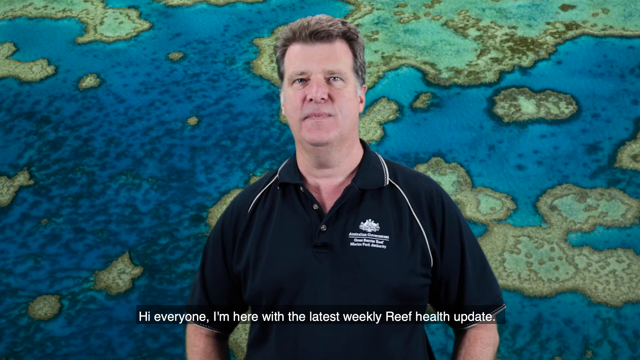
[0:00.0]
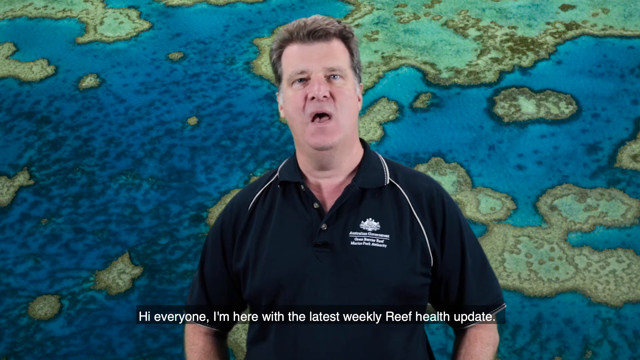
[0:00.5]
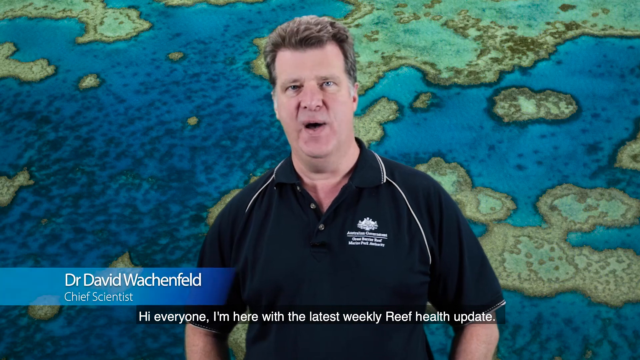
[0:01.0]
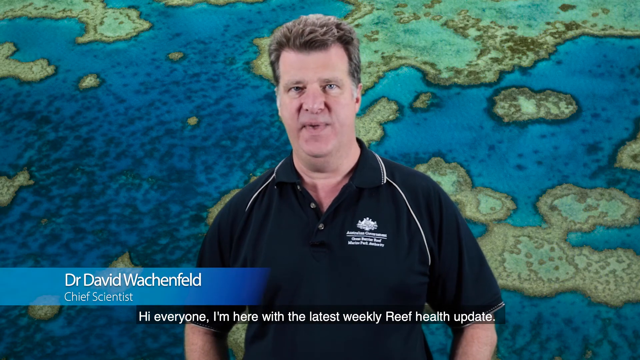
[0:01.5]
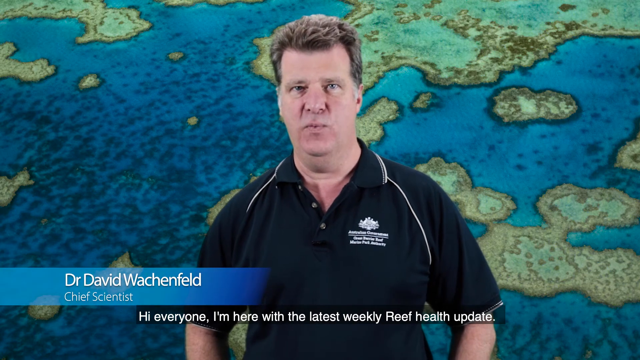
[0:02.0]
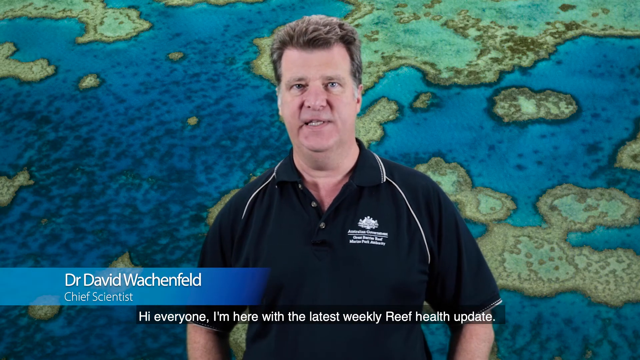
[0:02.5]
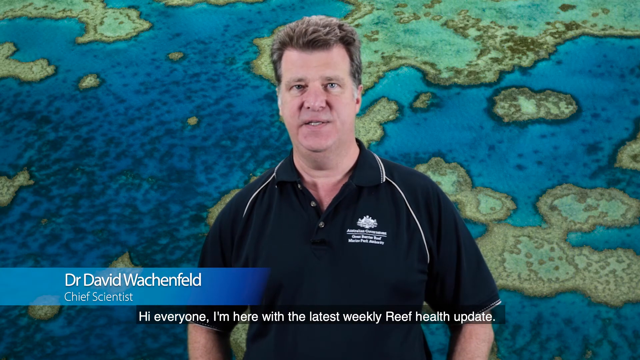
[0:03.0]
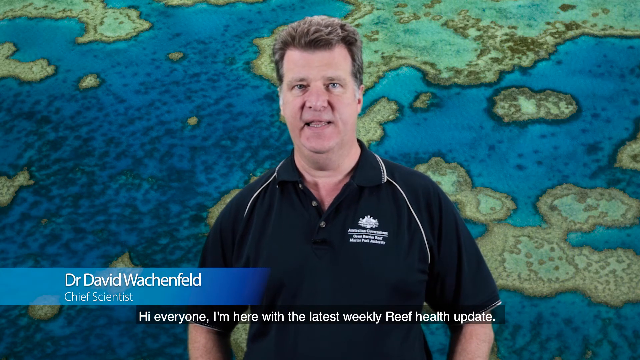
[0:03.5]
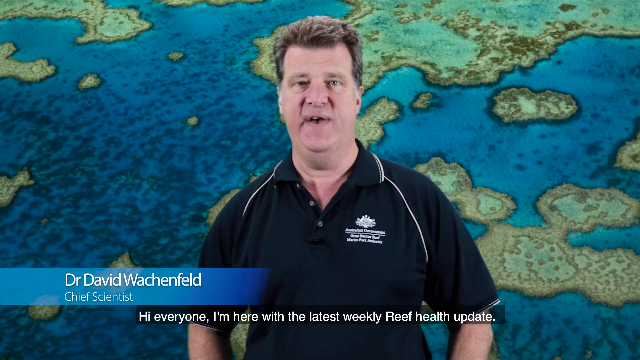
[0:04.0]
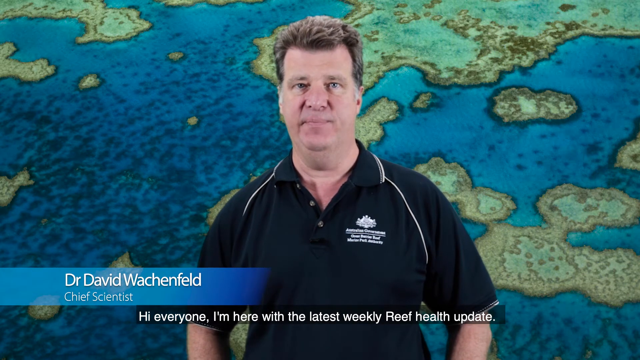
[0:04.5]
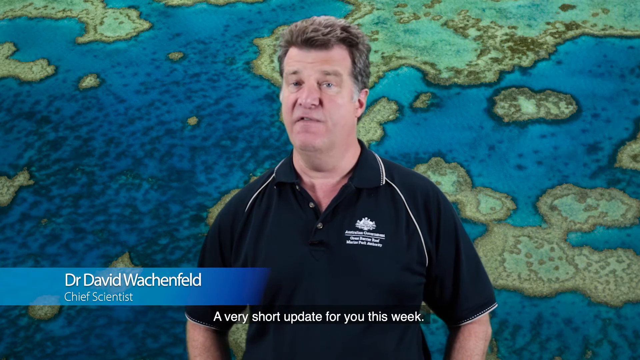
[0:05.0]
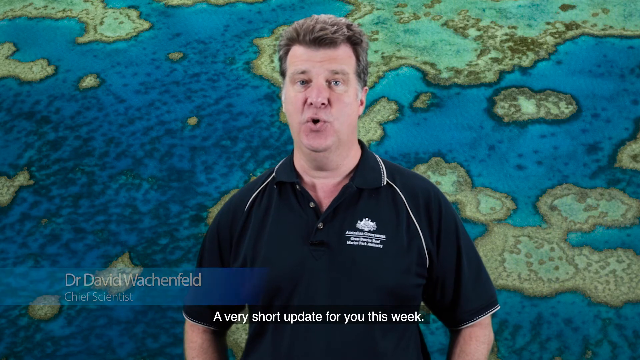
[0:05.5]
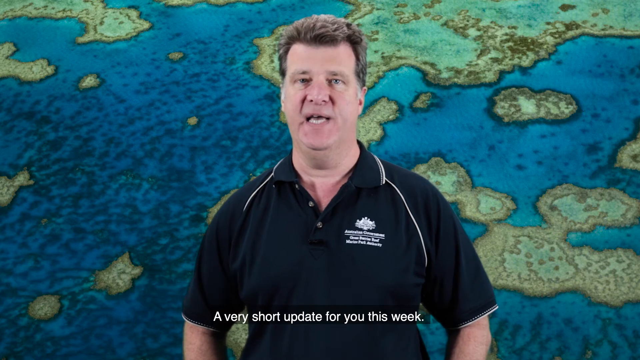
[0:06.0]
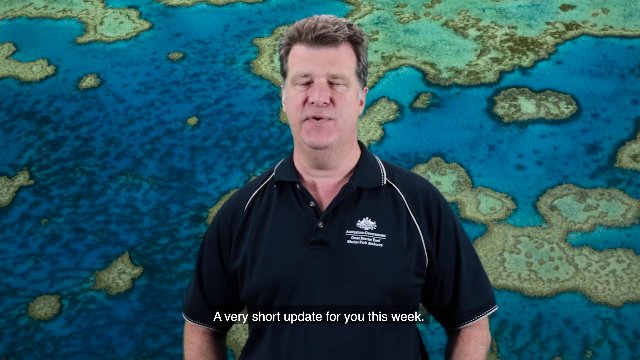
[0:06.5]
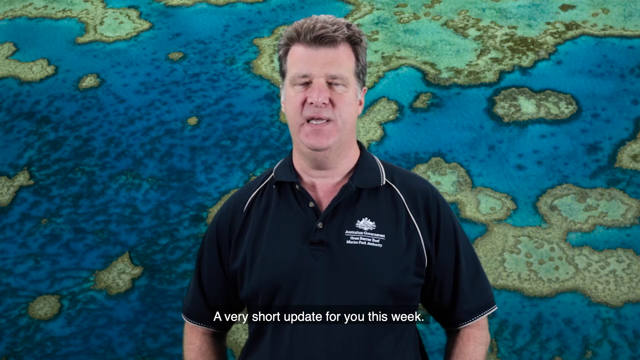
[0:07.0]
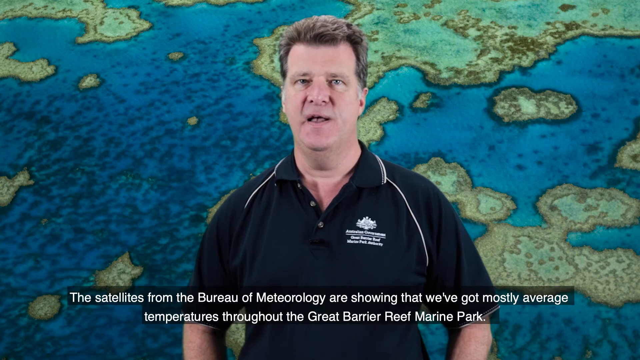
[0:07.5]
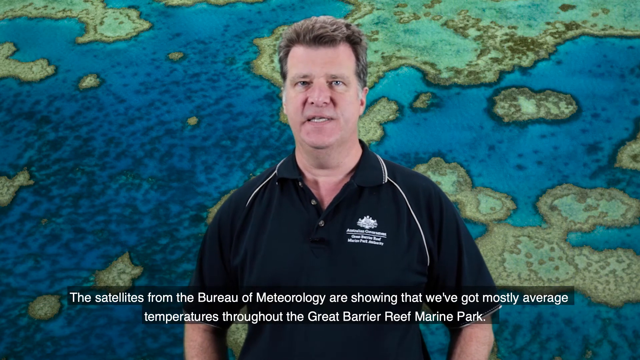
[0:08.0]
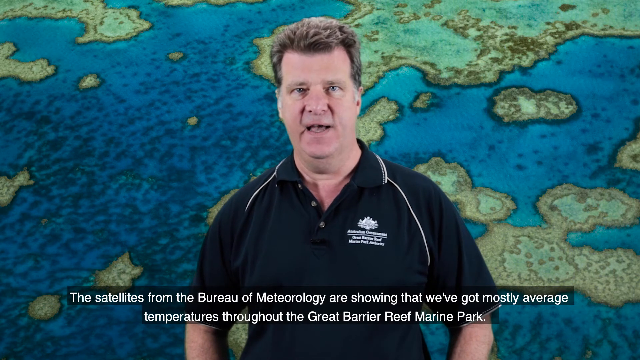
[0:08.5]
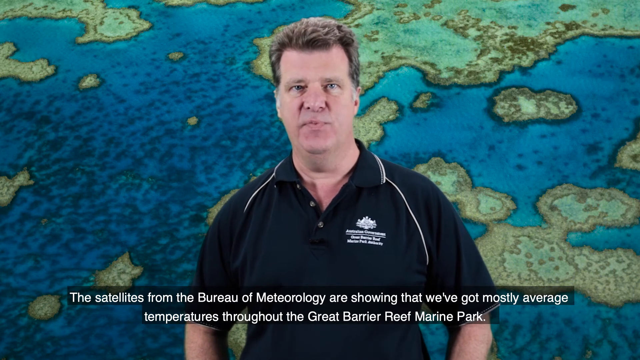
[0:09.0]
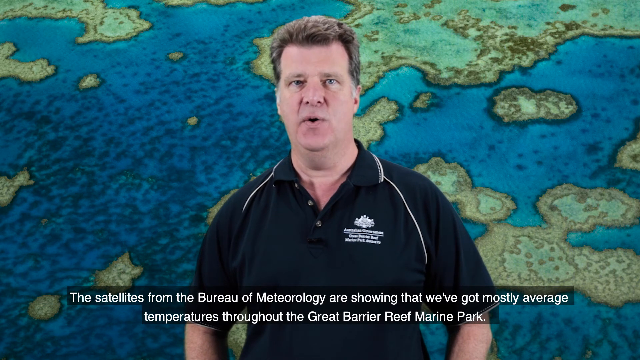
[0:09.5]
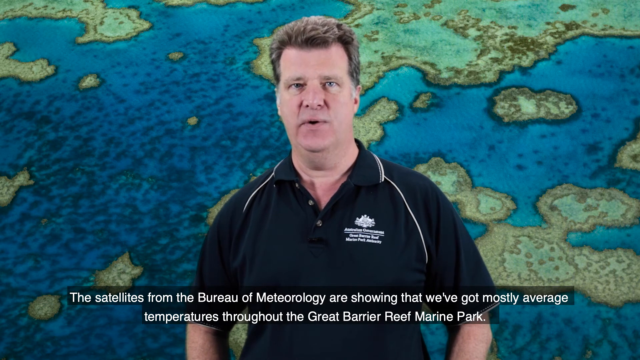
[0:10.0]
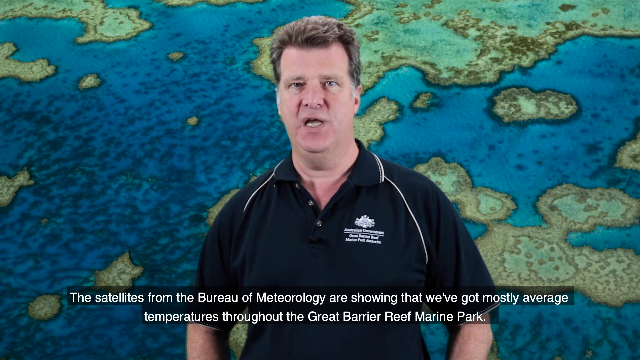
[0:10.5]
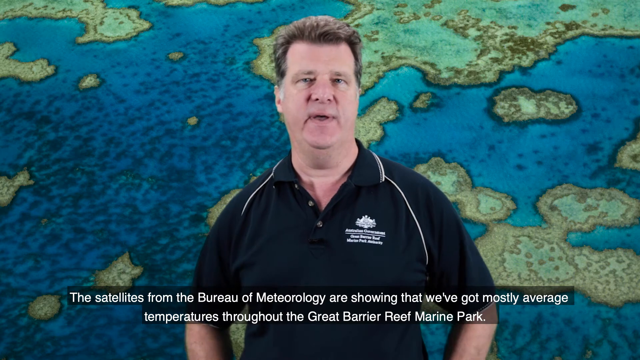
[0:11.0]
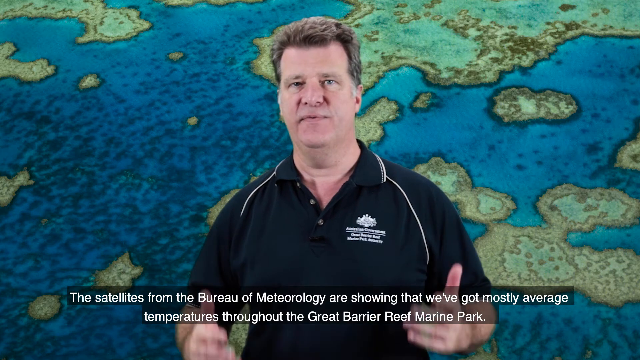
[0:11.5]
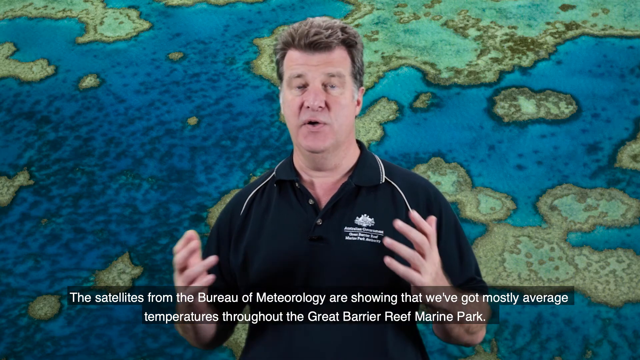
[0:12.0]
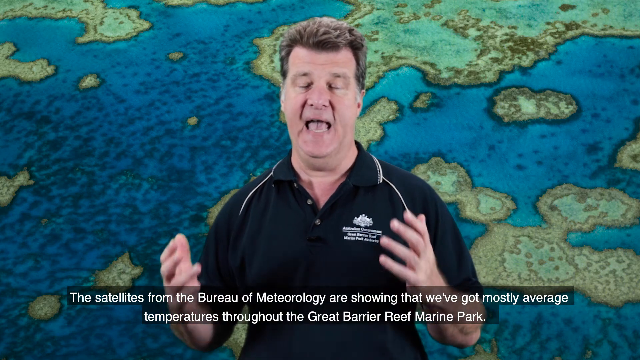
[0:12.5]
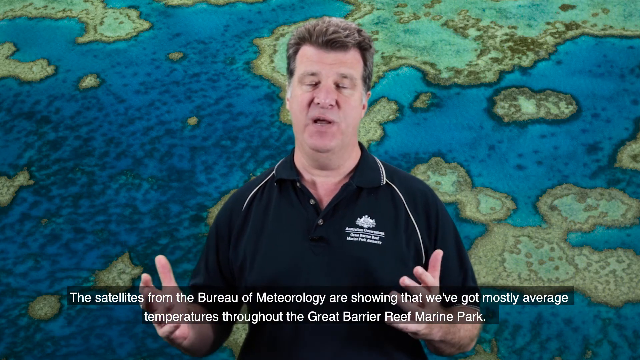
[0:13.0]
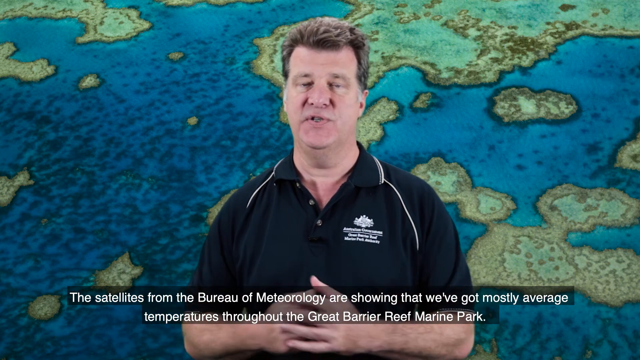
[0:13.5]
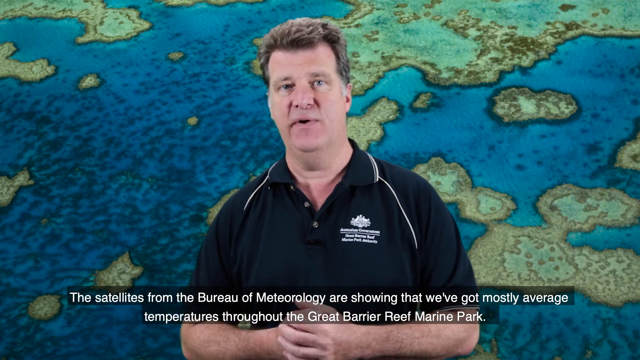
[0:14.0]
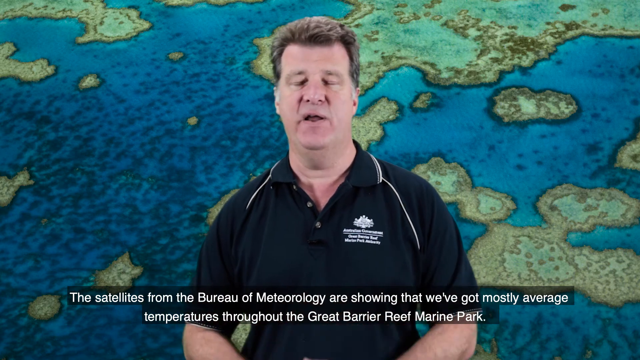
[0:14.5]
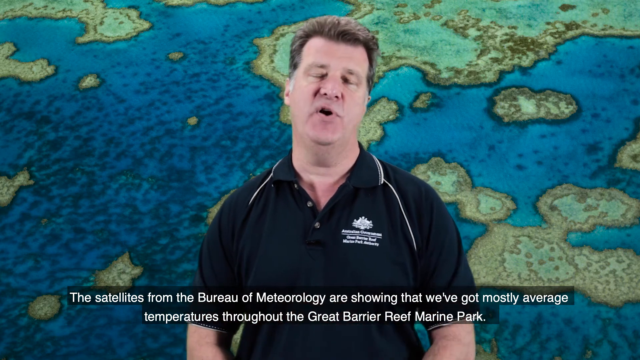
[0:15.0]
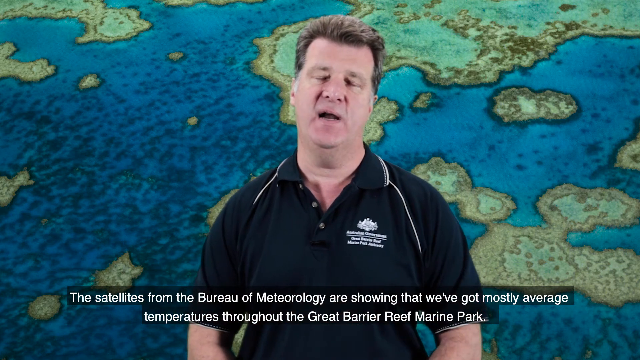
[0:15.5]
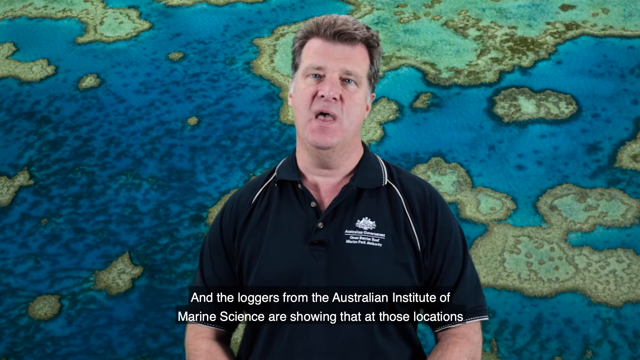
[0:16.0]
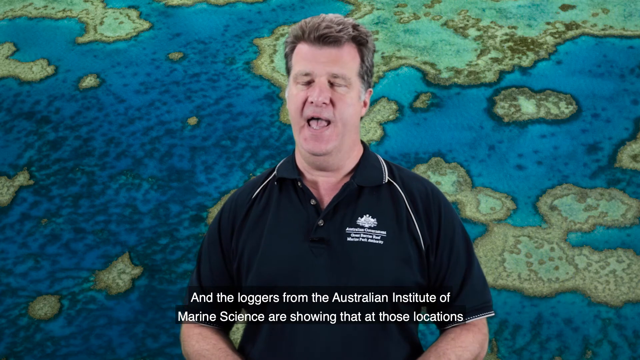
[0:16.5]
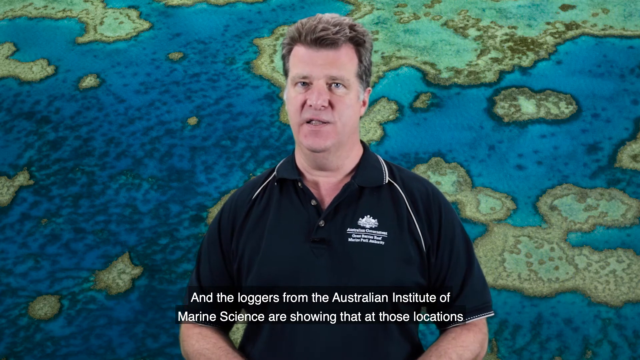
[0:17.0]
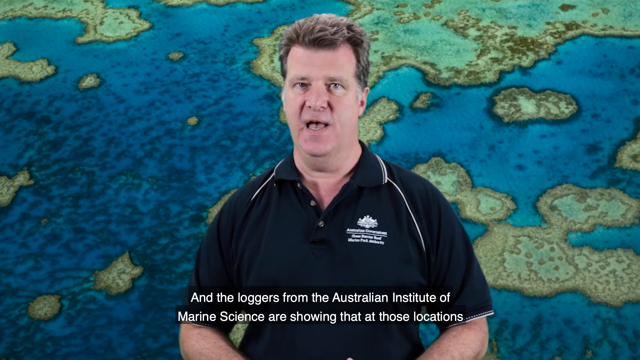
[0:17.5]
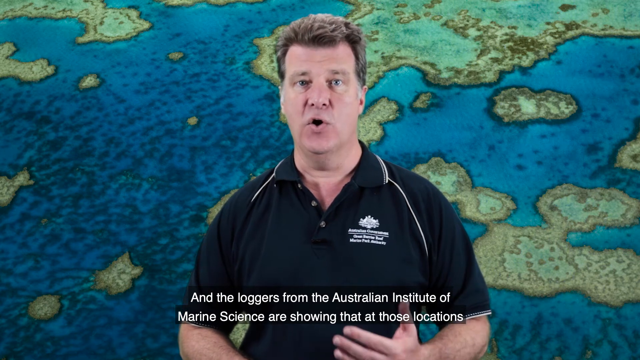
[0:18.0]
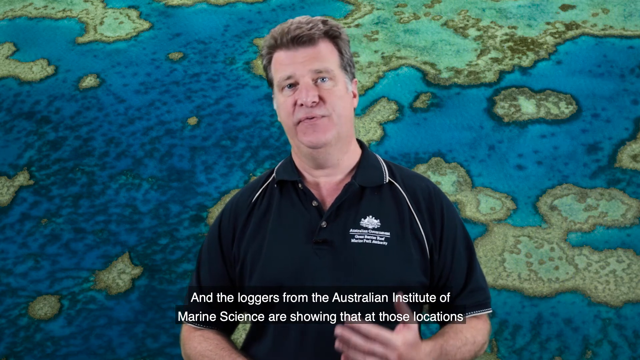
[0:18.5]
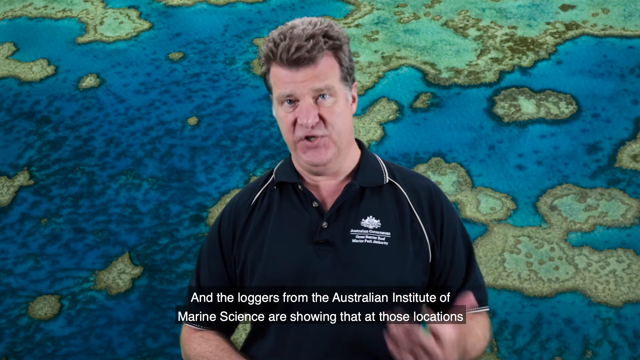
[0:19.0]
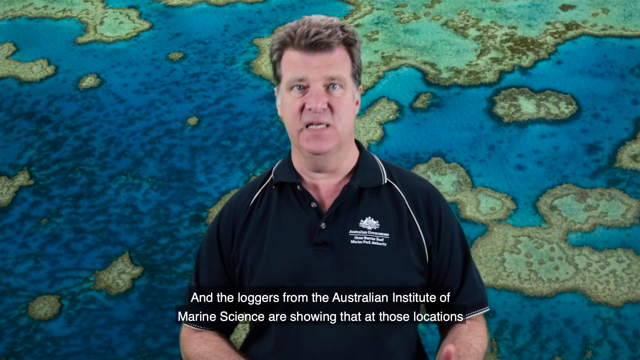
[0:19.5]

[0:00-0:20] The screen shows a man named Dr. David Wachenfield. He wears a black golf t-shirt and is around his 50s. Text in white letters appears at the bottom of the screen. Behind him in the background is a weather-focused map shown in green and blue, with a little black around the edges and brown in some locations, and no words or temperatures on it.